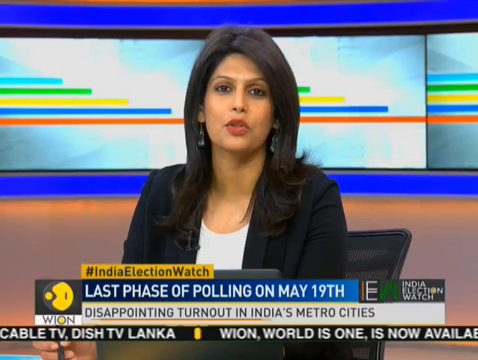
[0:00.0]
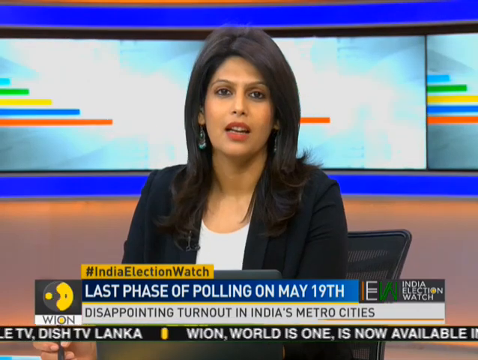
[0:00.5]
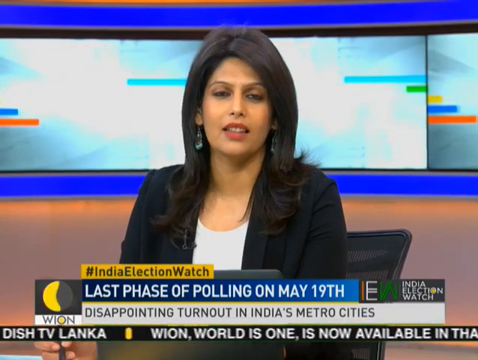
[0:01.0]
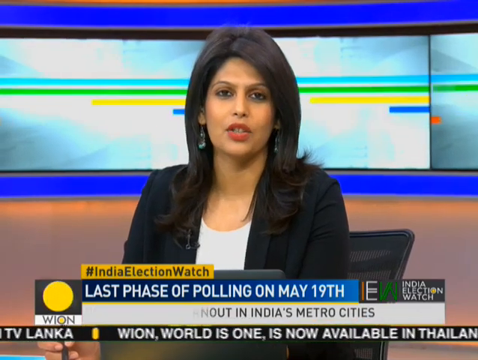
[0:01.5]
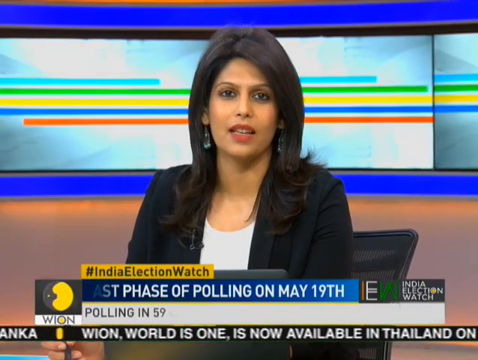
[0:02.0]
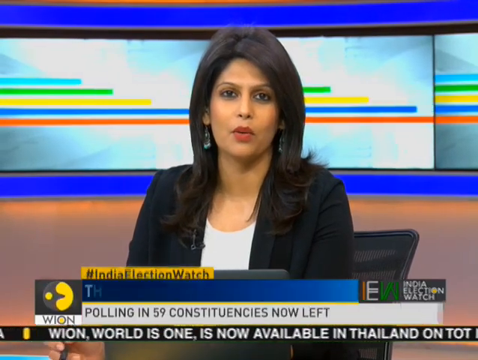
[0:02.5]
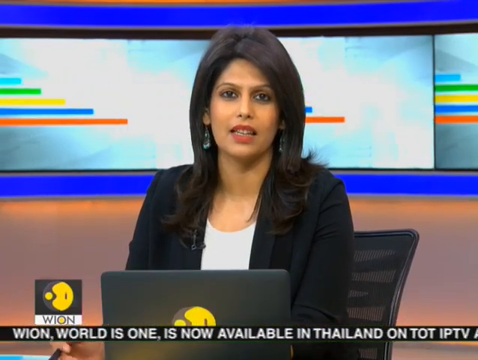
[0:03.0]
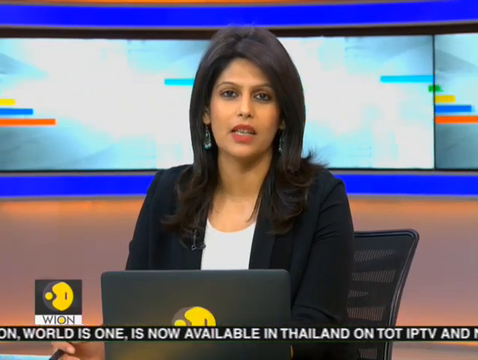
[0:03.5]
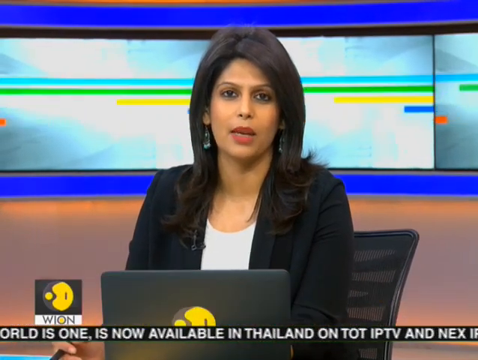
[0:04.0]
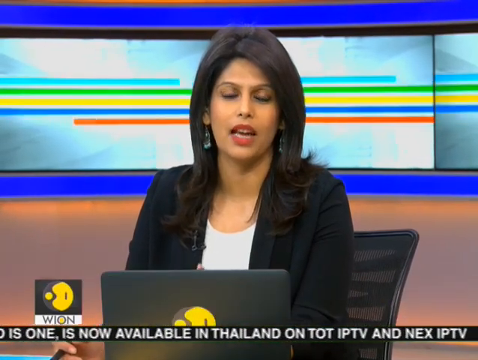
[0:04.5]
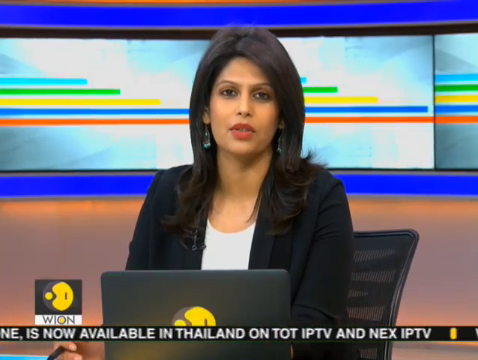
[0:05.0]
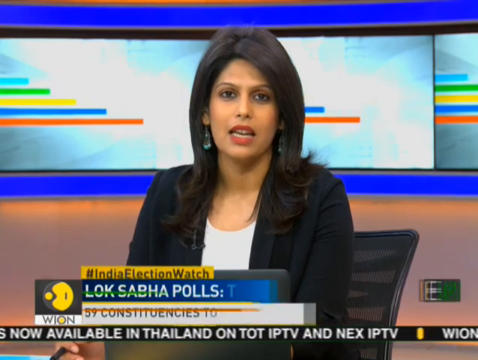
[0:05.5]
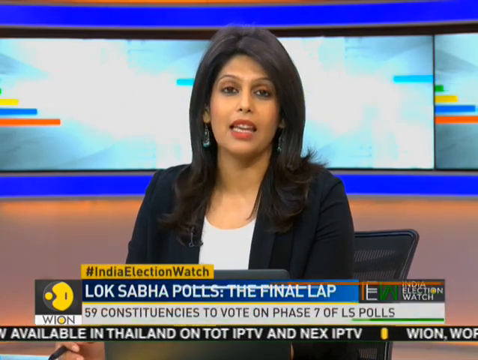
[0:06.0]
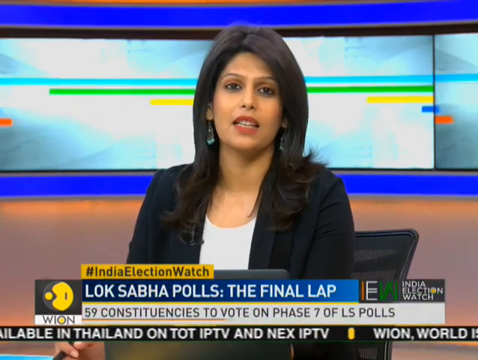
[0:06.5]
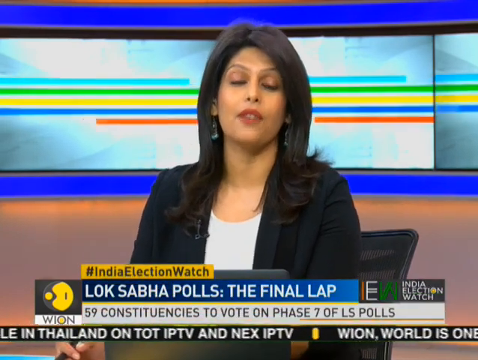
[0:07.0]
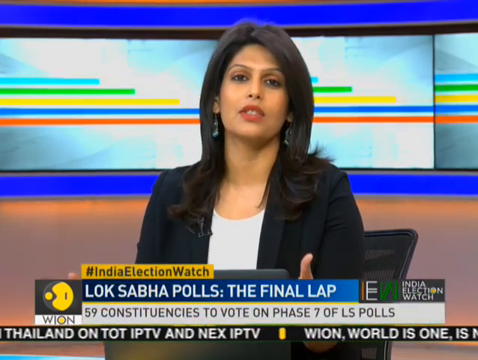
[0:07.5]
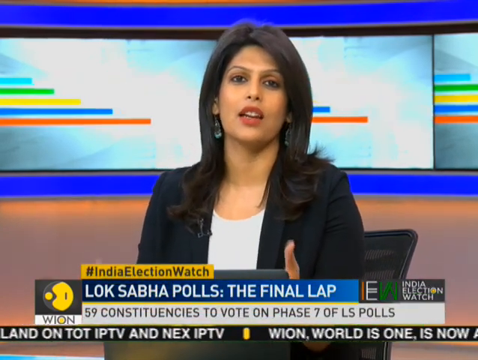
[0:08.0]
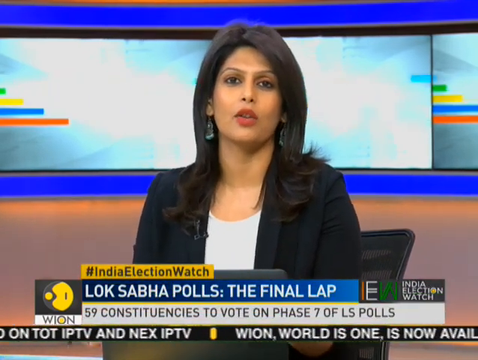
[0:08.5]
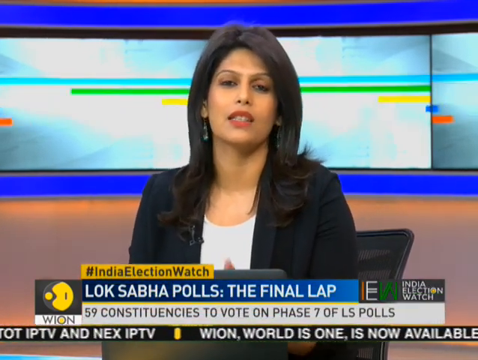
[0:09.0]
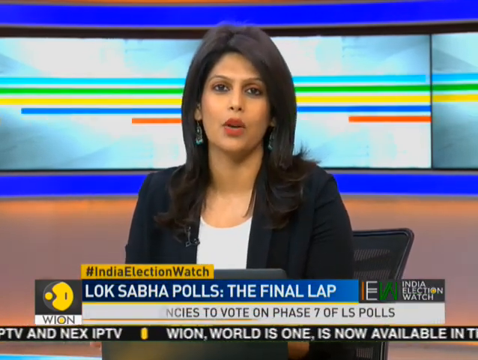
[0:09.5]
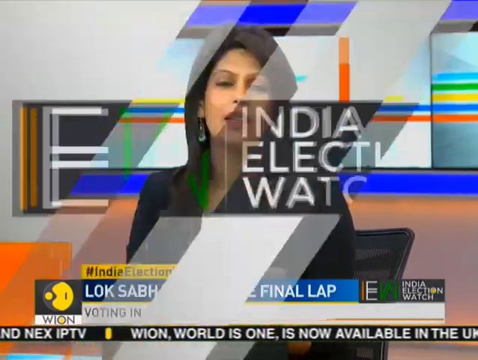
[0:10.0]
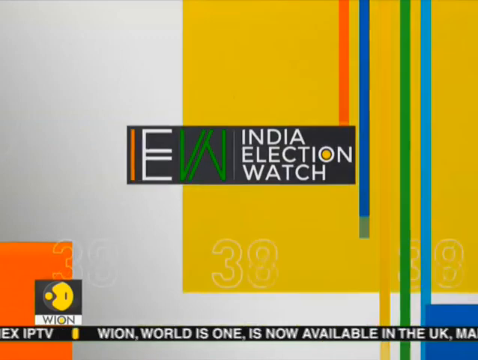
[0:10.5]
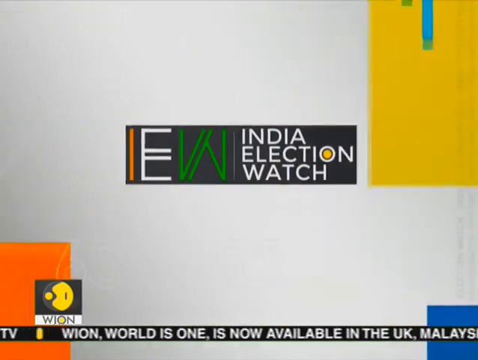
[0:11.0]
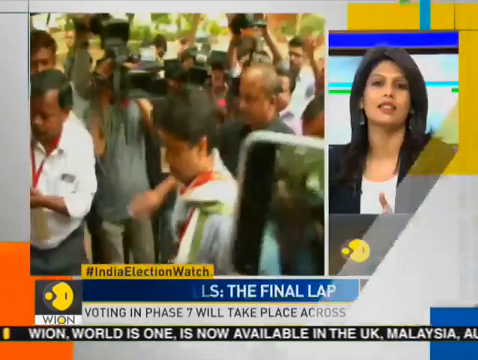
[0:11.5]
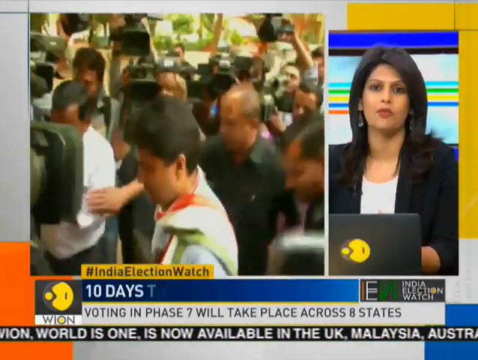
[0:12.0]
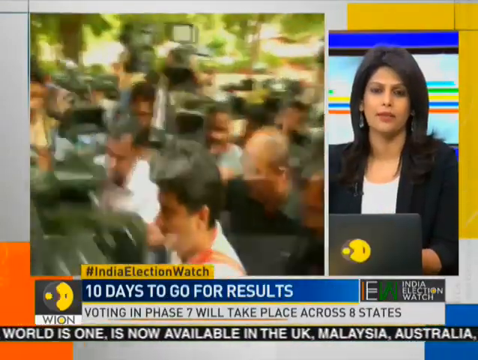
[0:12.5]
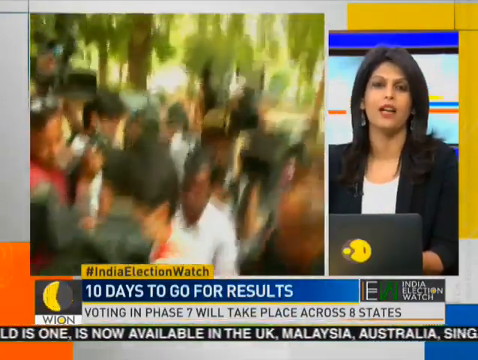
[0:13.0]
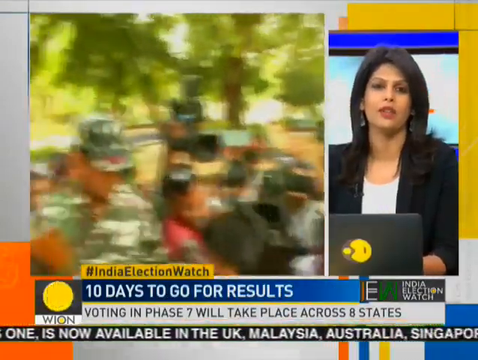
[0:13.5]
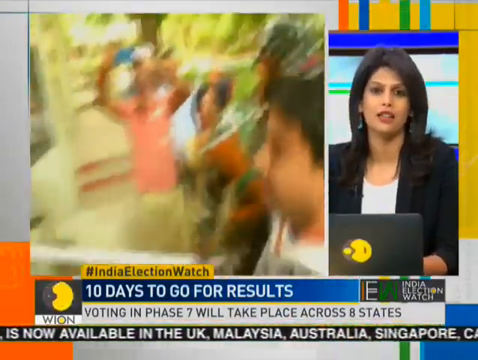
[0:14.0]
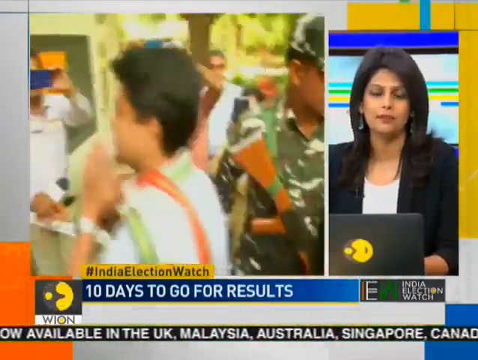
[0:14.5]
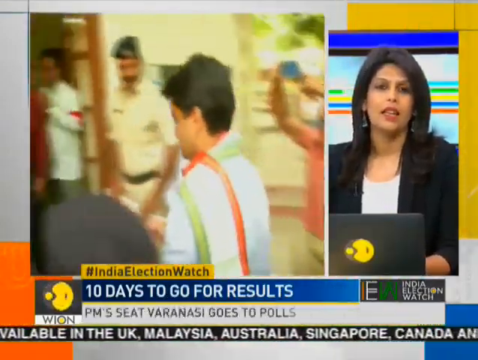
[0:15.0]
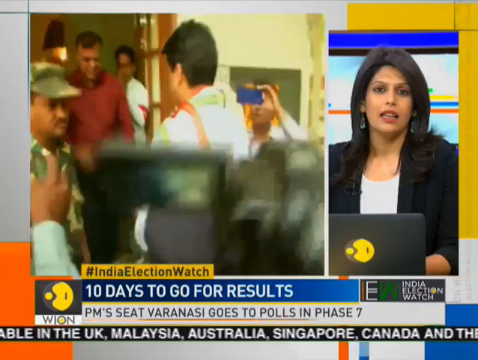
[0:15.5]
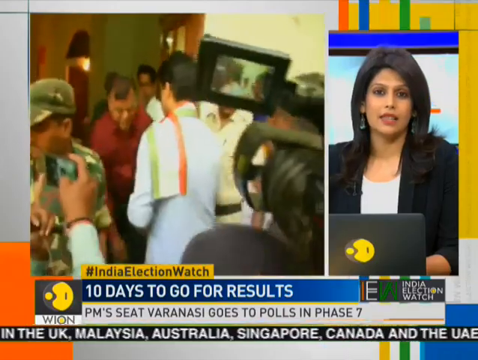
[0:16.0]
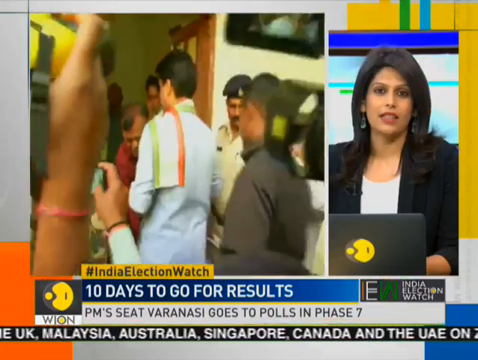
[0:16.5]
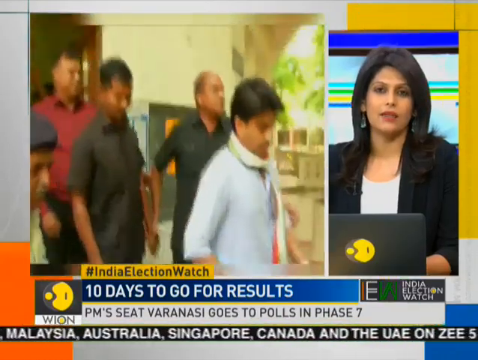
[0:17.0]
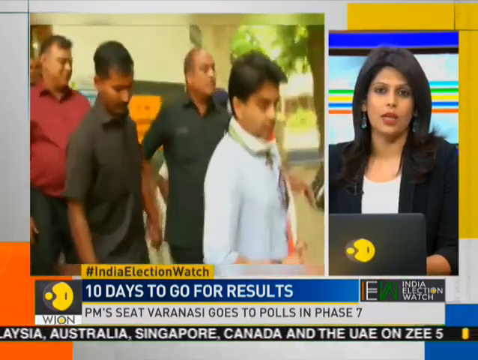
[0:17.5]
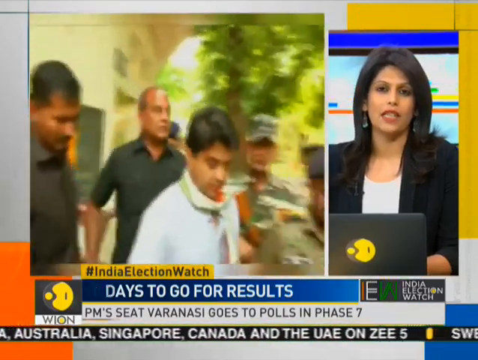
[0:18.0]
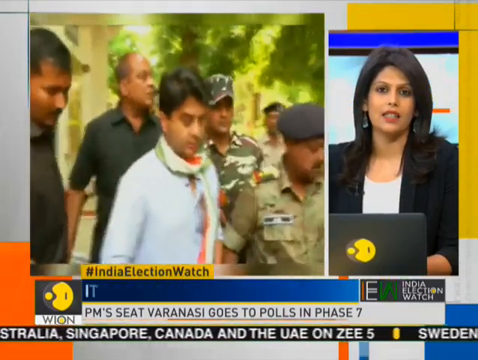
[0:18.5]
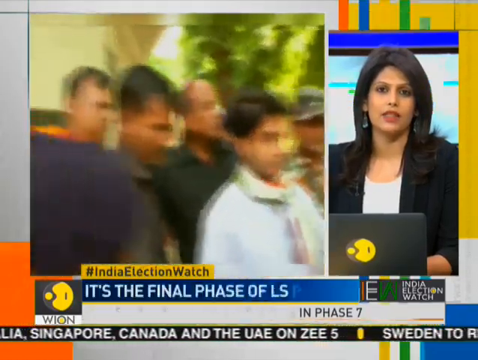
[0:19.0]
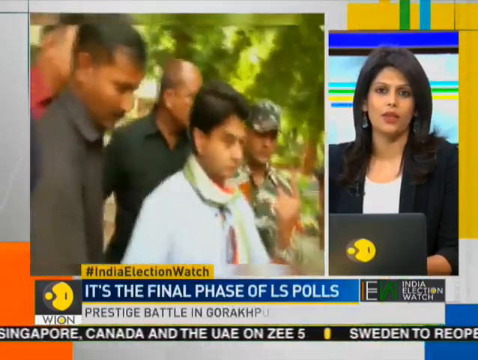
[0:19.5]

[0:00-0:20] The video is a news broadcast about election day, opening with a female anchor reading the news. She wears a black coat and a white top and is seated at a black desk on a black chair. In the background are screens displaying graphic-like images. Text reads "India election watch," "Last phase of polling on May 19th" and "Disappointing turnout in India's metro city." She has a greyish laptop, and the company's logo is behind the laptop. More text follows: "Indian election watch," "Lok Sabha polls, the final lap" and "59 constituencies to vote on phase 7 of LS polls." The Indian Election Watch logo, "IEW," appears. The screen then splits: the anchor is on the right side, and on the other side news people take pictures of a person walking, apparently a leader. Text reads "10 days to go for results" and "Voting in phase 7 will take place across eight states." A policeman with guns is visible, and what appears to be a leader is with his bodyguards.